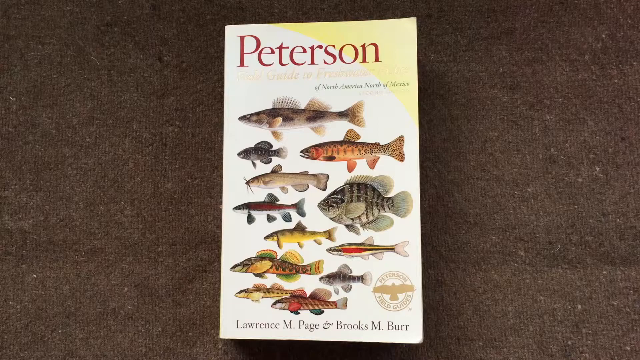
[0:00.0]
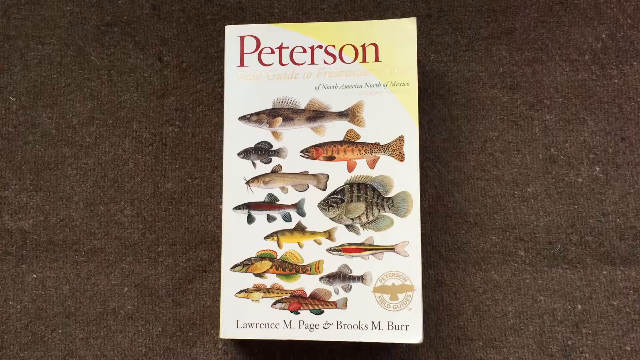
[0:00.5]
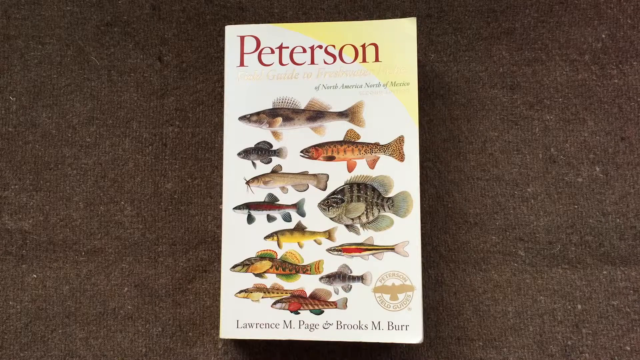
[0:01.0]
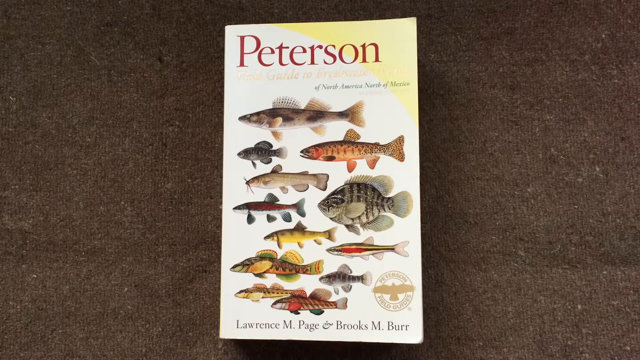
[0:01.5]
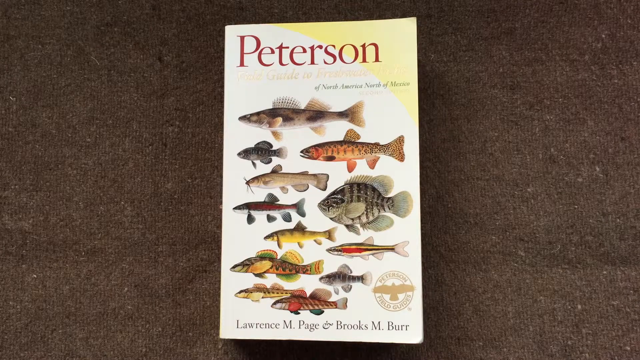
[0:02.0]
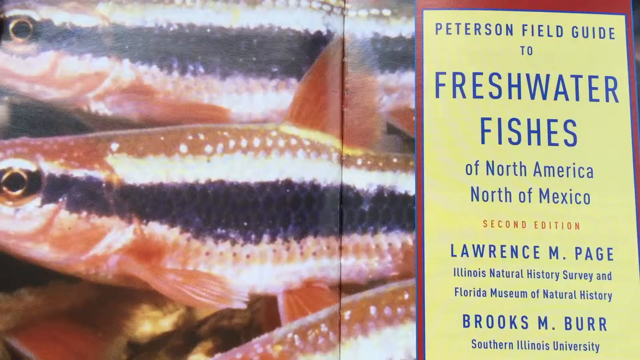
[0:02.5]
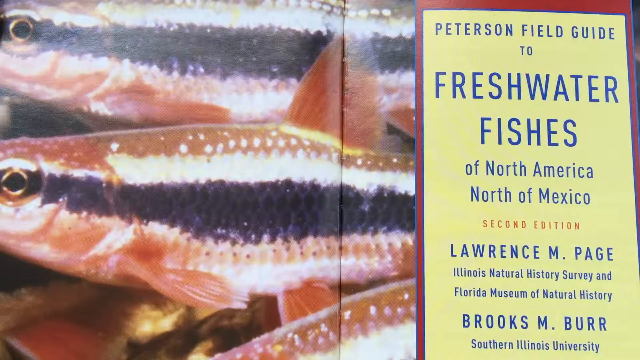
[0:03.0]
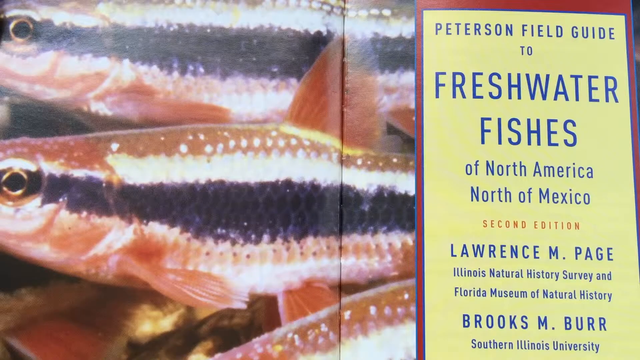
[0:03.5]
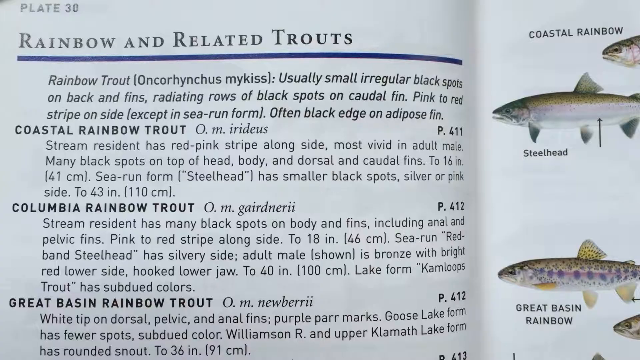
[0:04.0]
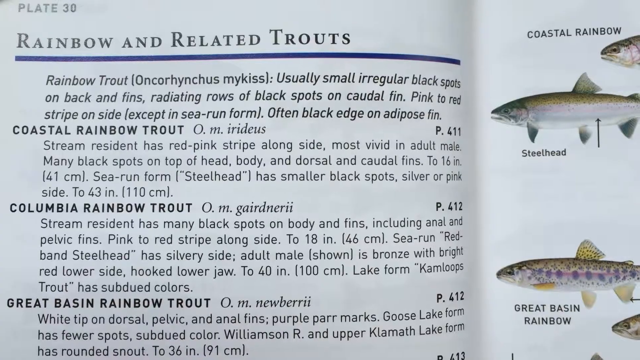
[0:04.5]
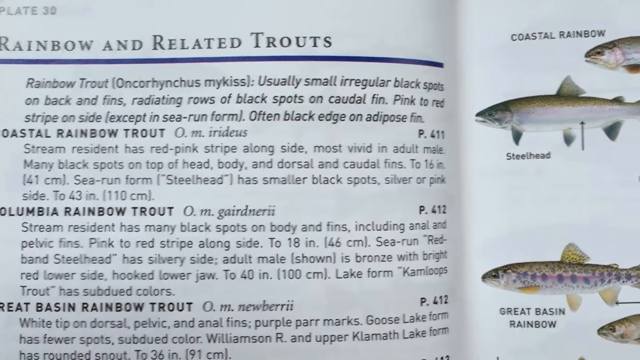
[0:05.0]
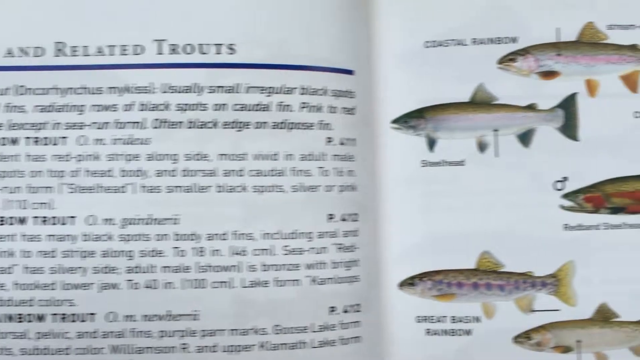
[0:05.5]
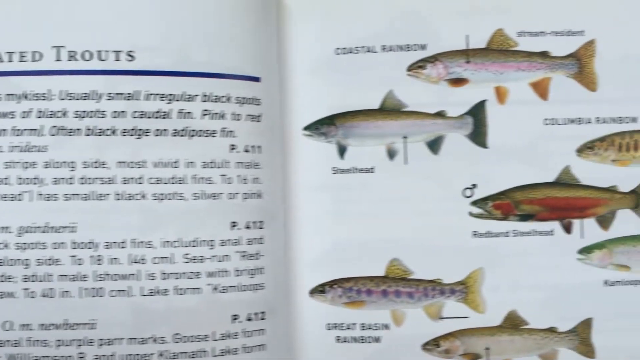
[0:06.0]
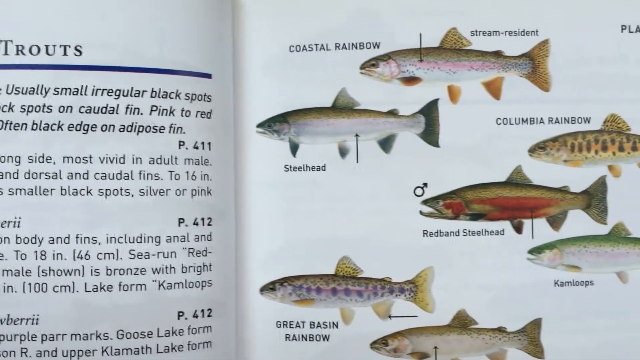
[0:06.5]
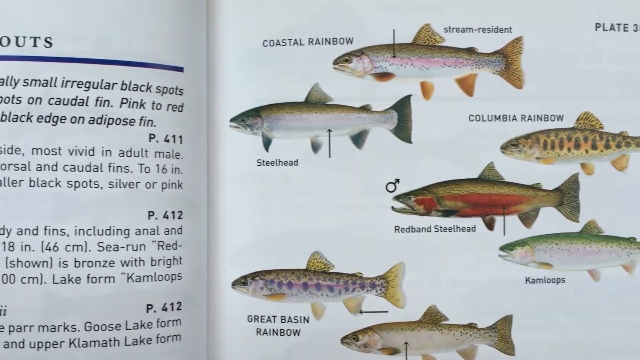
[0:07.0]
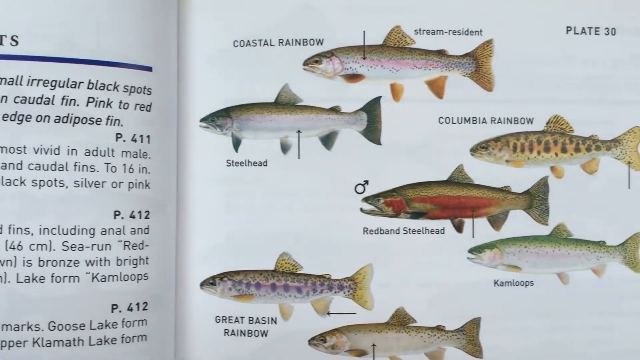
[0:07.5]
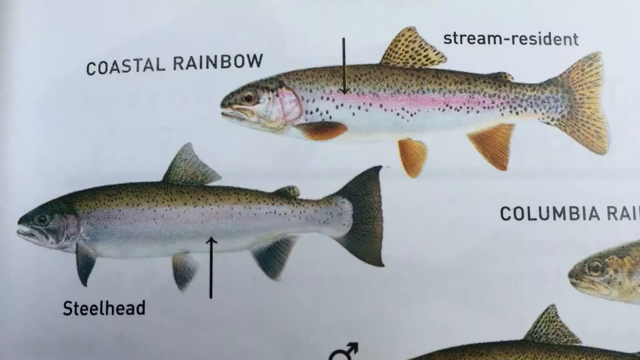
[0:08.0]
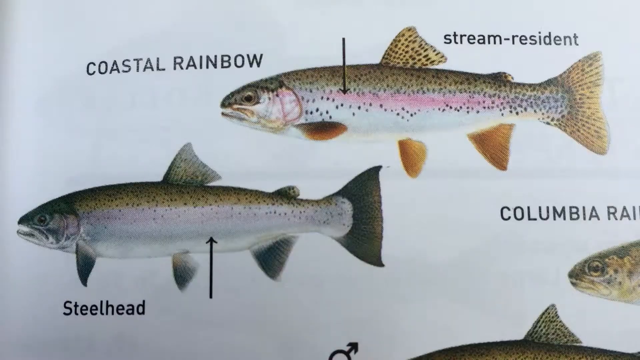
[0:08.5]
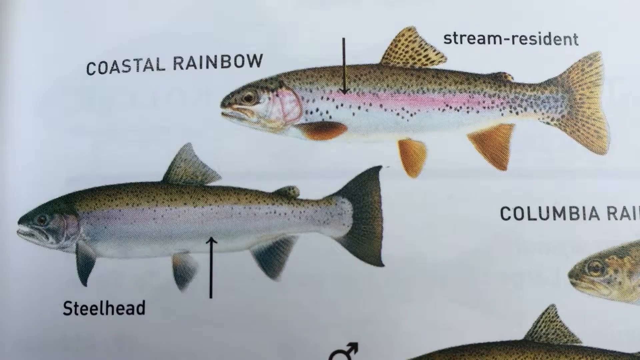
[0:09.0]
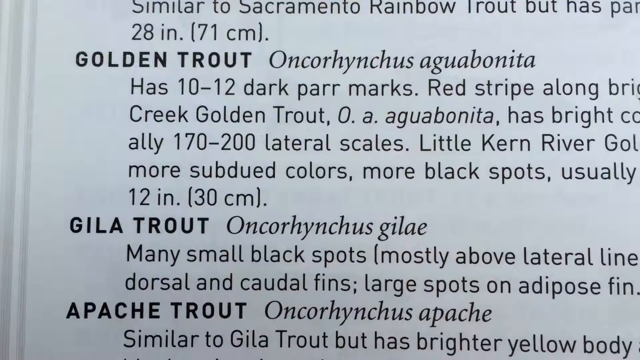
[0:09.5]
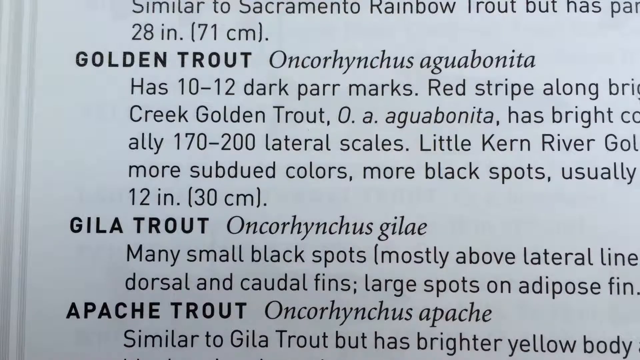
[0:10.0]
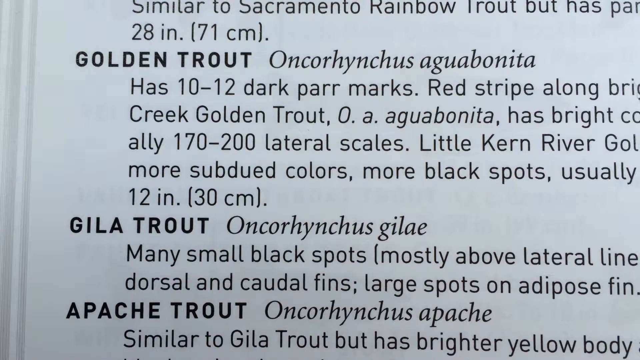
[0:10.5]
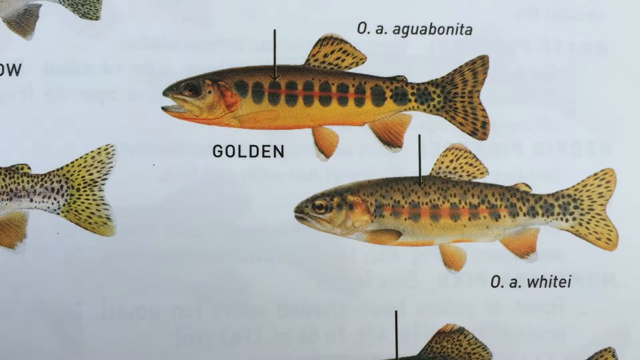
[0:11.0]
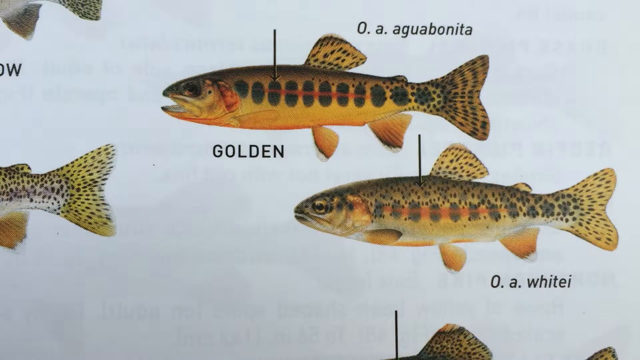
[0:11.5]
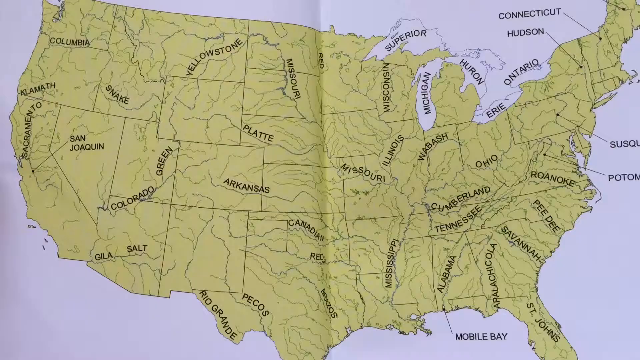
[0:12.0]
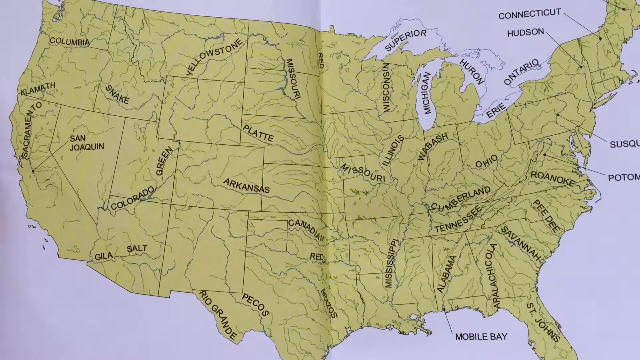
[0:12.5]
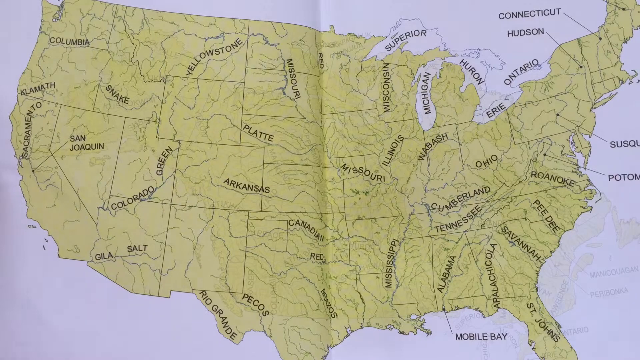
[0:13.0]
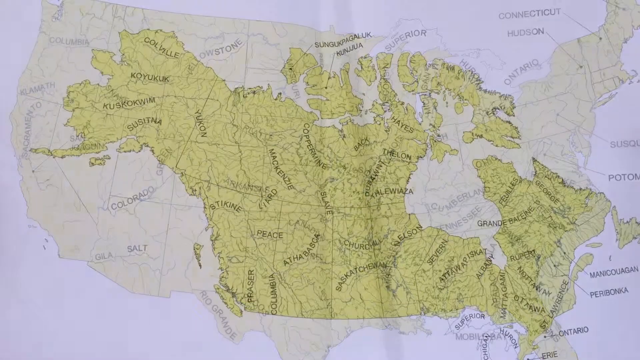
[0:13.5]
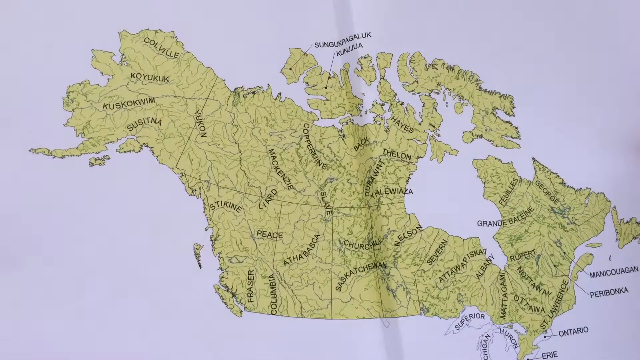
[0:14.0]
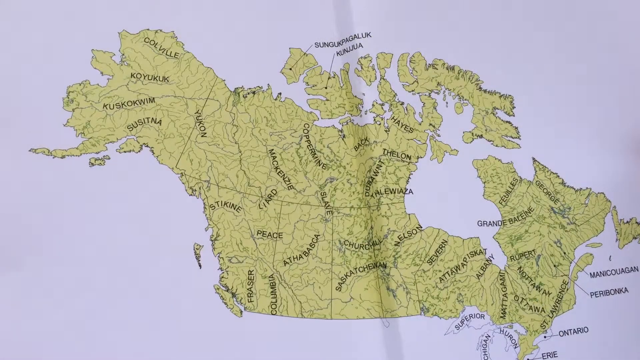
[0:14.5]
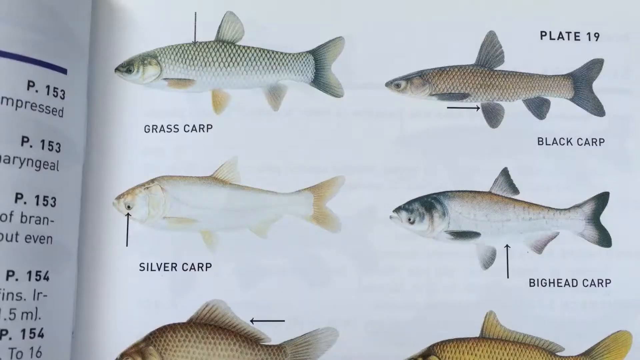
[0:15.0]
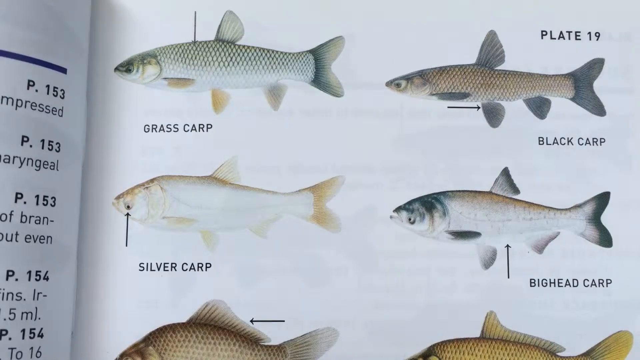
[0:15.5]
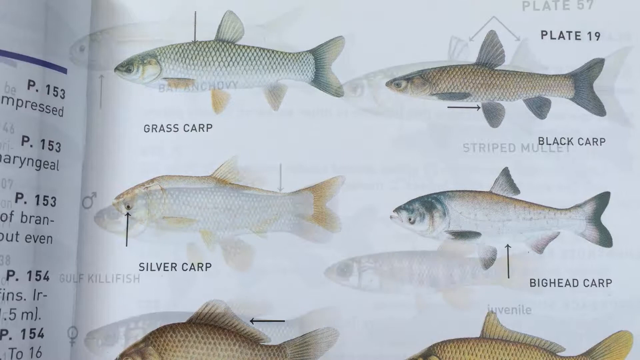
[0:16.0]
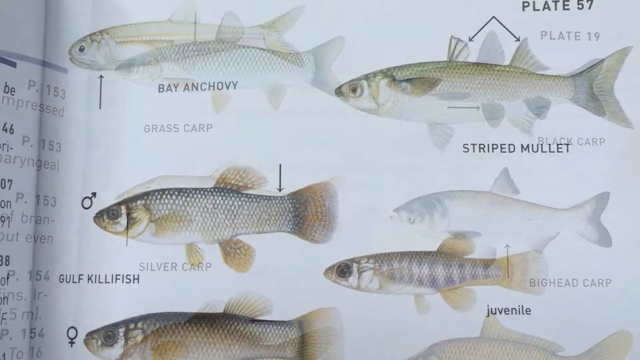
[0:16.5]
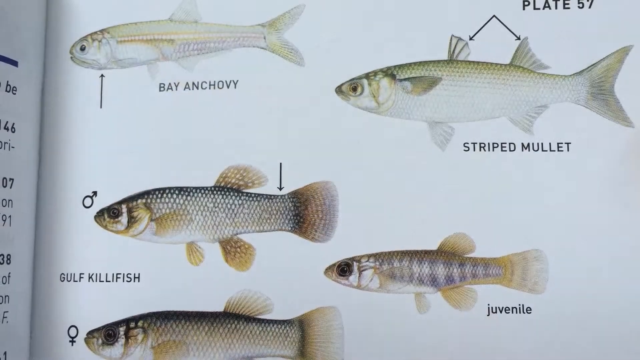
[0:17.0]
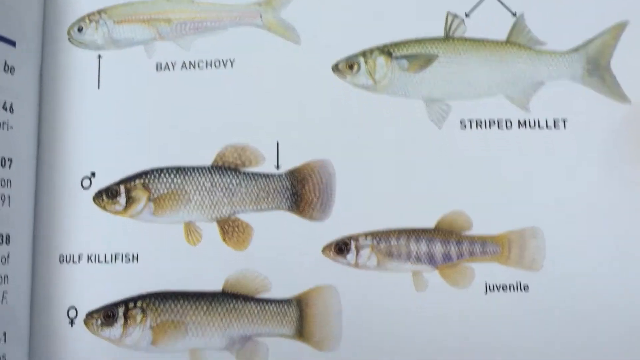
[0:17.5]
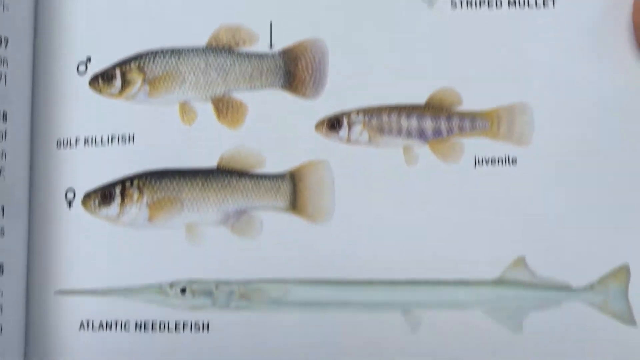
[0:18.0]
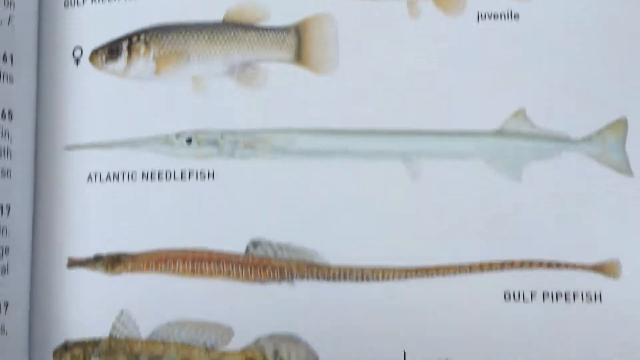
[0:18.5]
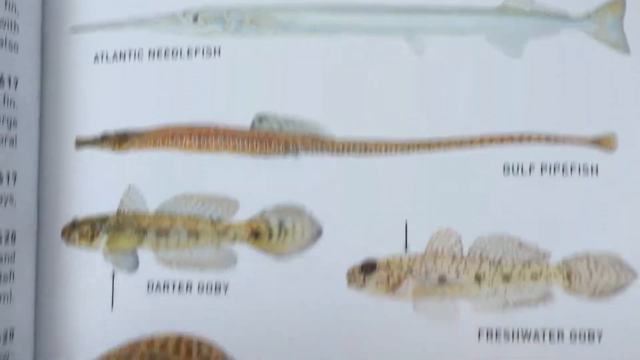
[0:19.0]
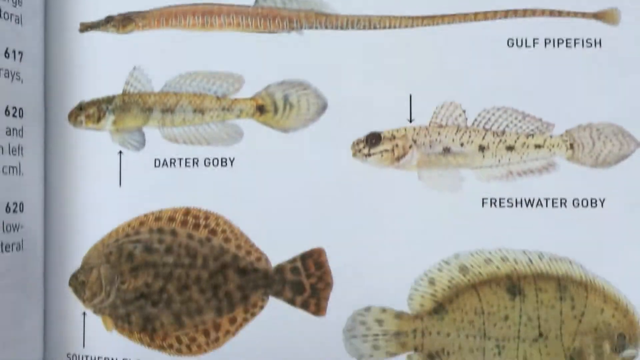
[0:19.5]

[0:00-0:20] A book lies on something that looks like a sofa. Its cover reads "Peterson" and "of North America, north of Mexico" and is covered with many images of different fish, with "Lawrence M. Page and Brooks M. Burr", probably the authors, at the bottom. Next, a page of the book shows some kind of fish on the left side and text on the right that reads "Peterson field guide to freshwater fishes of north america north of mexico second edition lawrence m. page Illinois natural history survey and florida museum of natural history brooks m. burr". The following spread shows many types of rainbow and related trouts, with descriptions of how they look on the left and images of them on the right page; about six are visible: Coastal Rainbow, Steelhead, Columbia Rainbow, Redband Steelhead, Kamloops and Great Basin Rainbow. There is a close-up of a coastal rainbow. Next come what are probably images of golden fish, then a map of the whole US with every state, and then Canada. Fish images follow of grass carp, black carp, silver carp and bighead carp, then images of bay anchovy, striped mullet, gulf killfish and a juvenile. The camera moves downwards to show Atlantic needlefish, gulf pipefish, darter goby and freshwater goby.